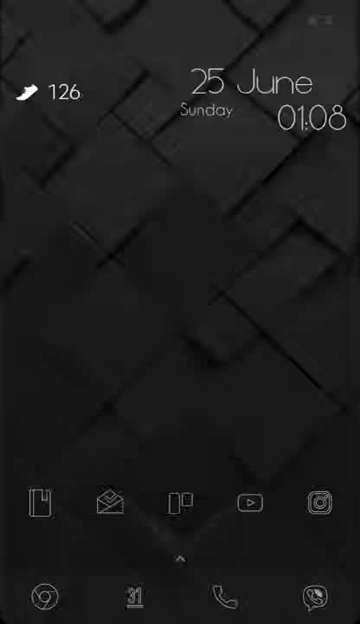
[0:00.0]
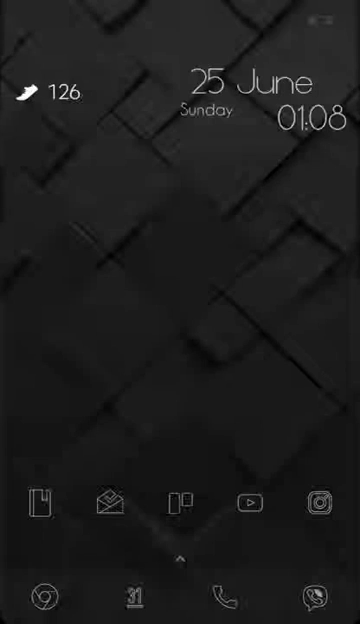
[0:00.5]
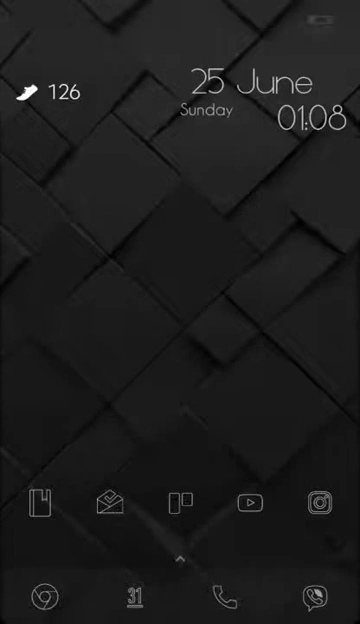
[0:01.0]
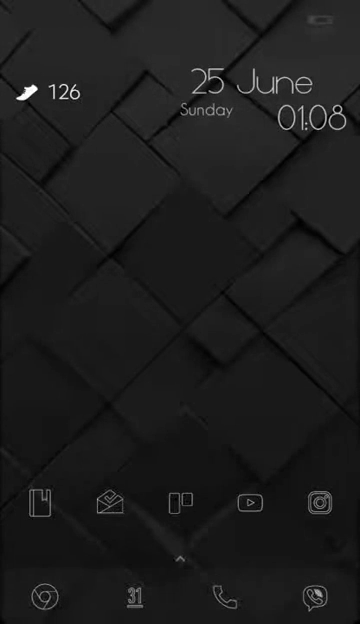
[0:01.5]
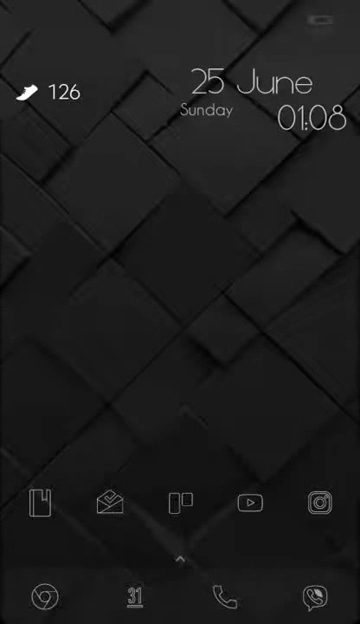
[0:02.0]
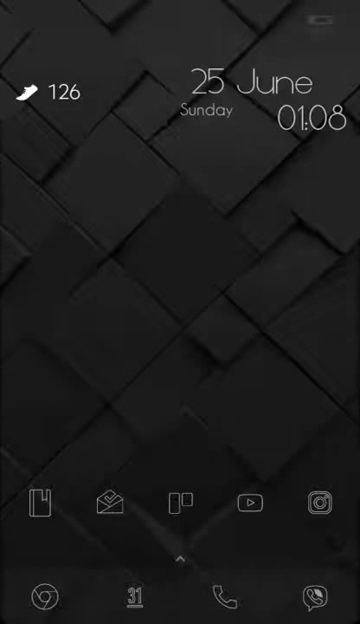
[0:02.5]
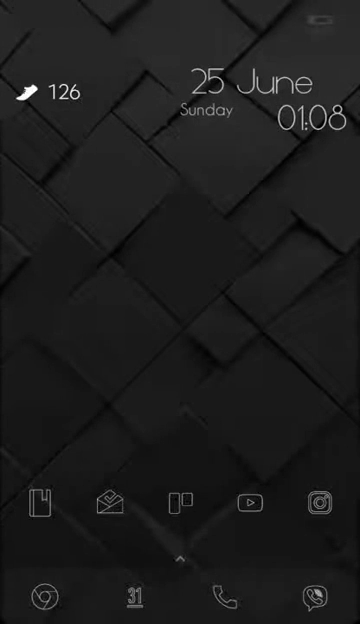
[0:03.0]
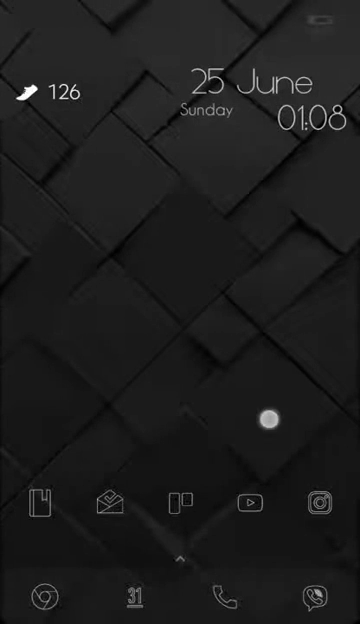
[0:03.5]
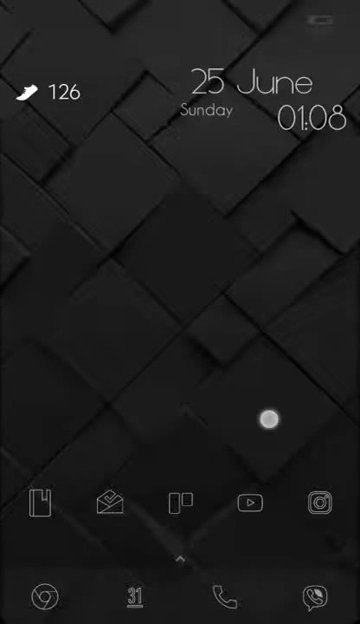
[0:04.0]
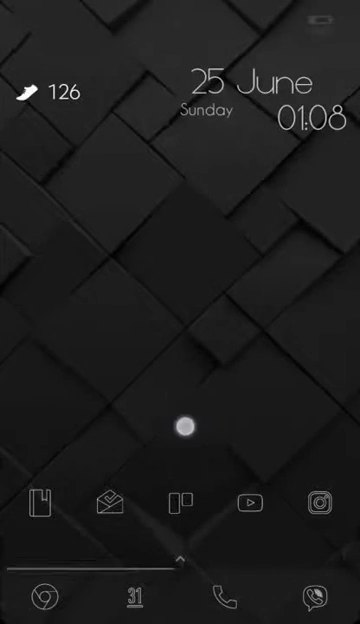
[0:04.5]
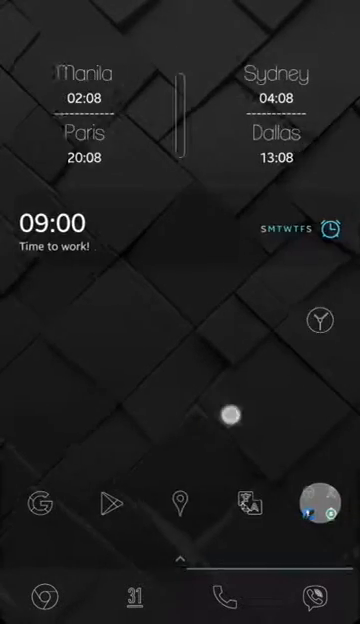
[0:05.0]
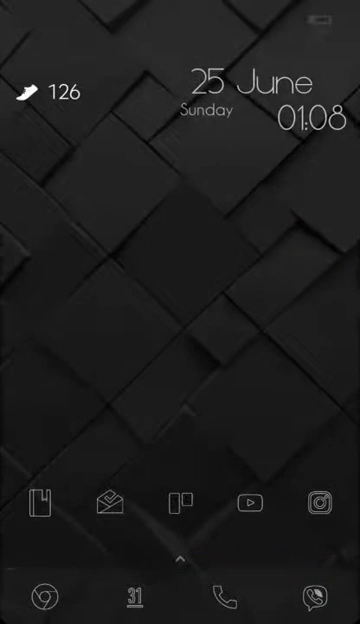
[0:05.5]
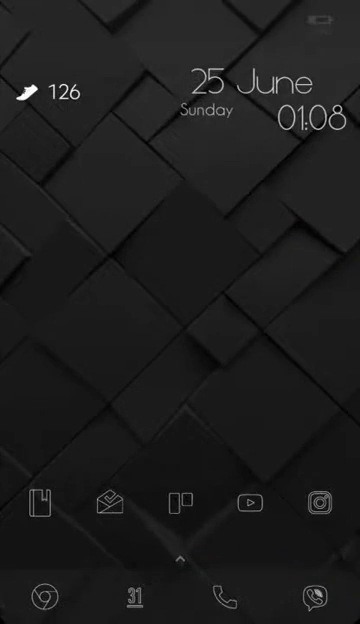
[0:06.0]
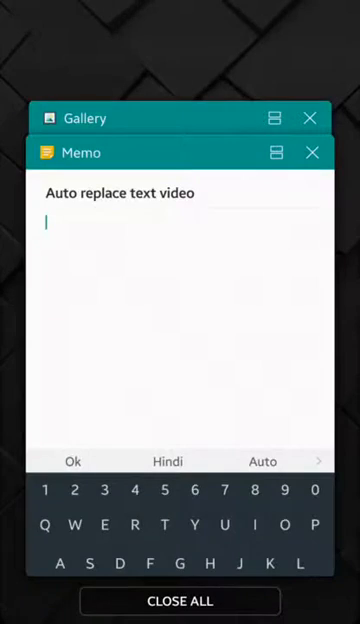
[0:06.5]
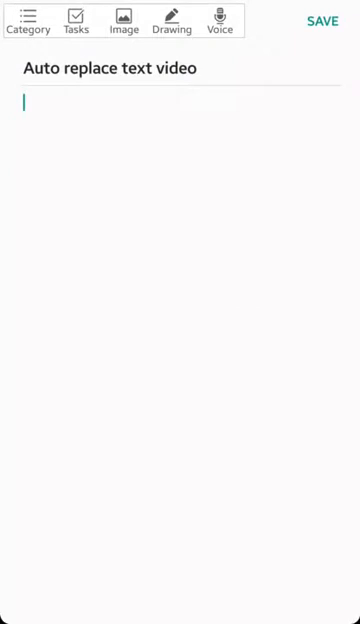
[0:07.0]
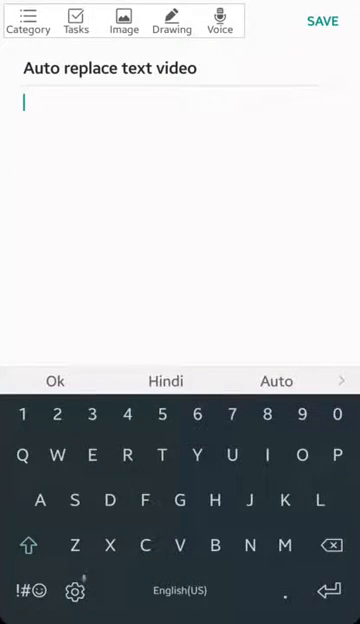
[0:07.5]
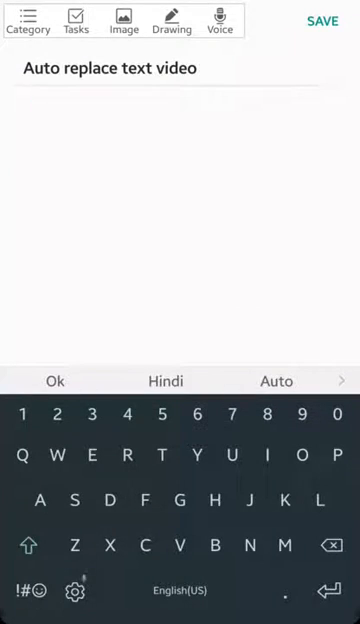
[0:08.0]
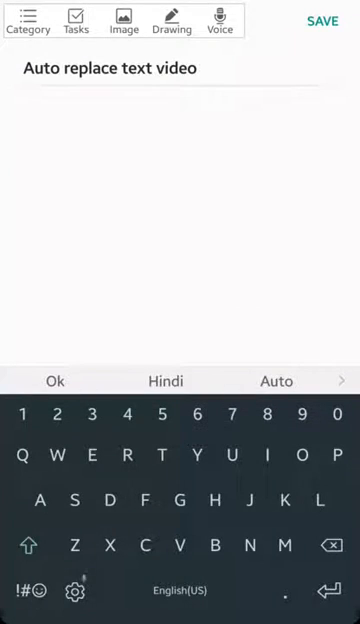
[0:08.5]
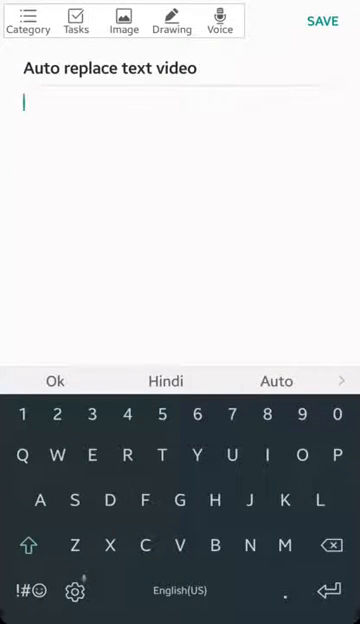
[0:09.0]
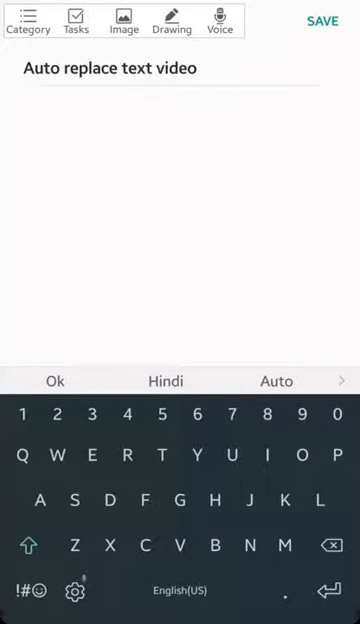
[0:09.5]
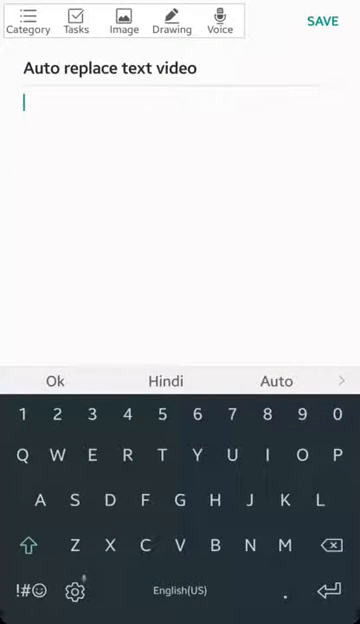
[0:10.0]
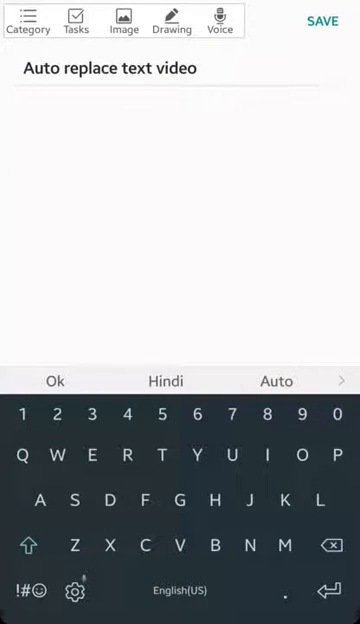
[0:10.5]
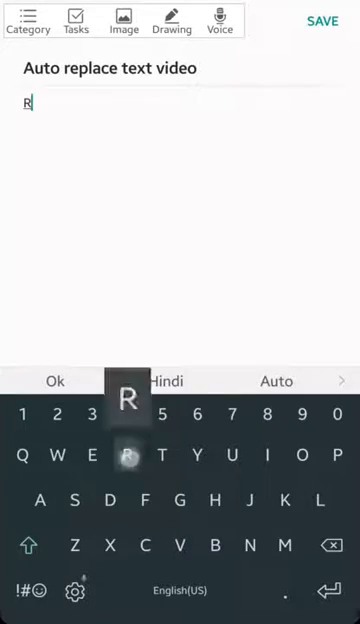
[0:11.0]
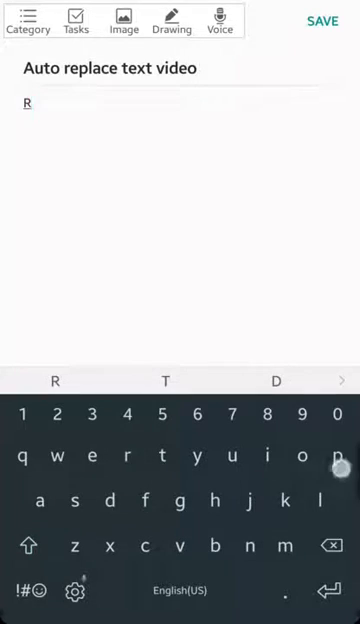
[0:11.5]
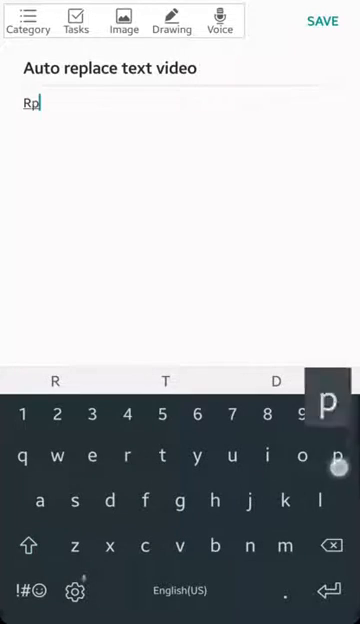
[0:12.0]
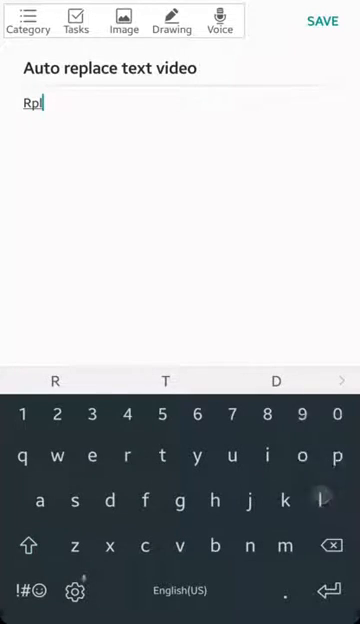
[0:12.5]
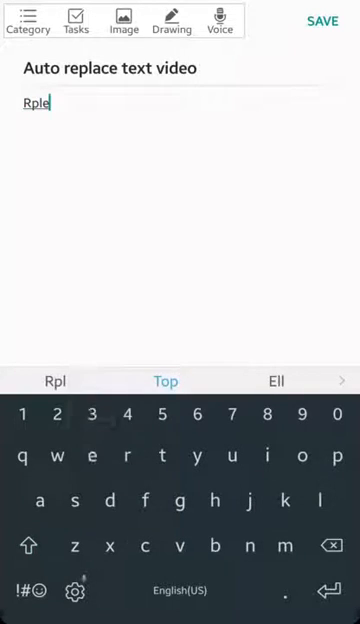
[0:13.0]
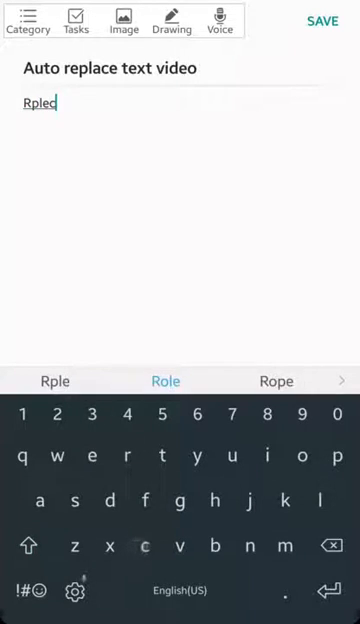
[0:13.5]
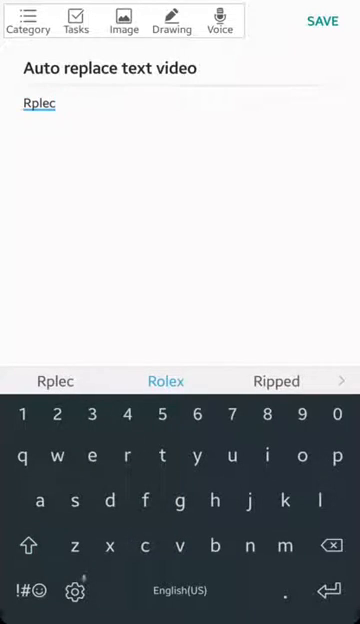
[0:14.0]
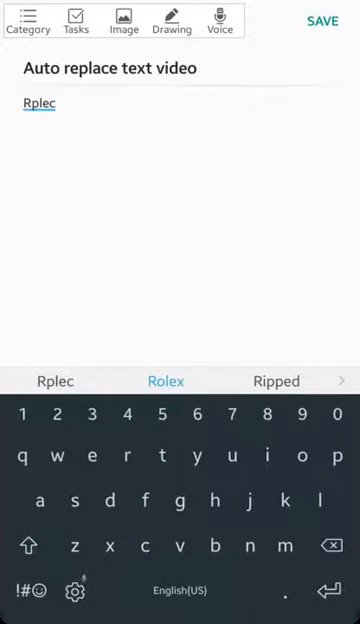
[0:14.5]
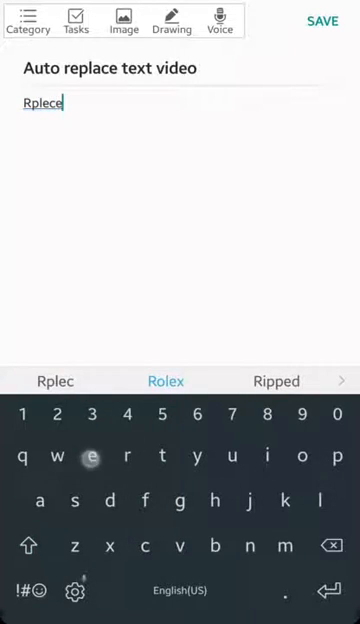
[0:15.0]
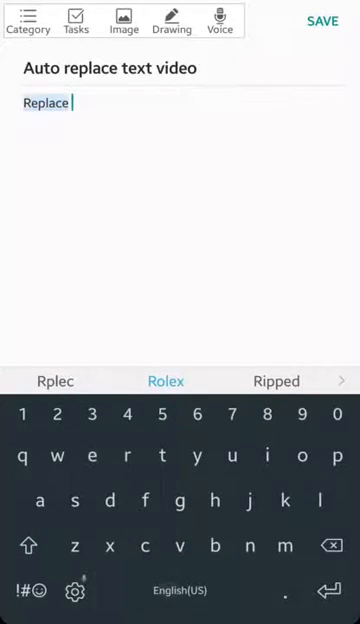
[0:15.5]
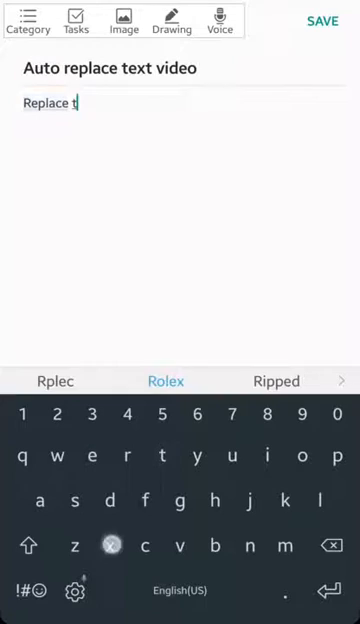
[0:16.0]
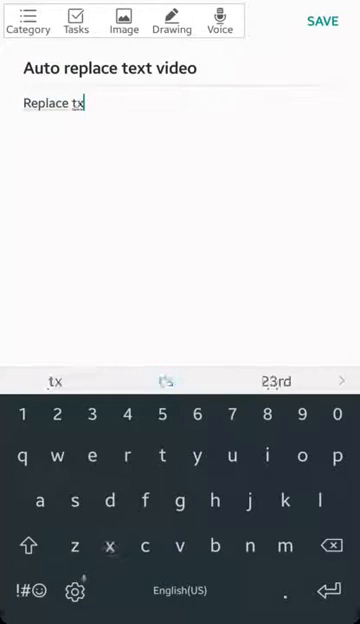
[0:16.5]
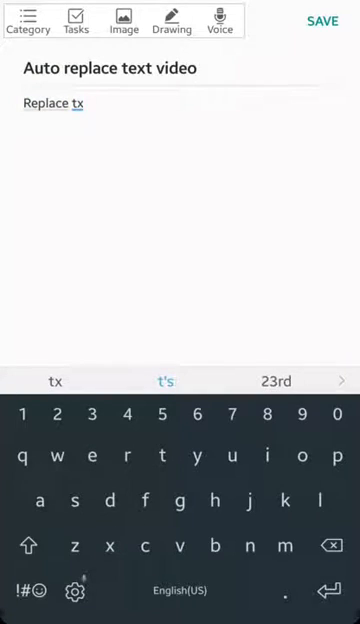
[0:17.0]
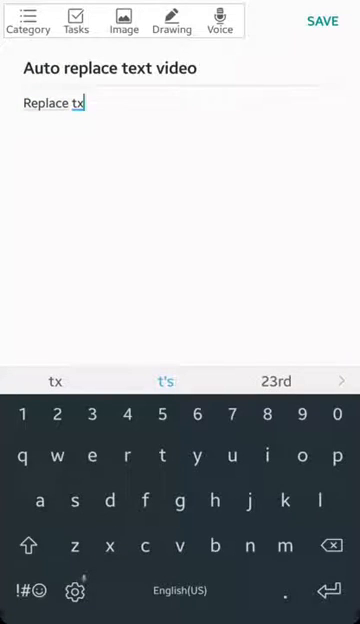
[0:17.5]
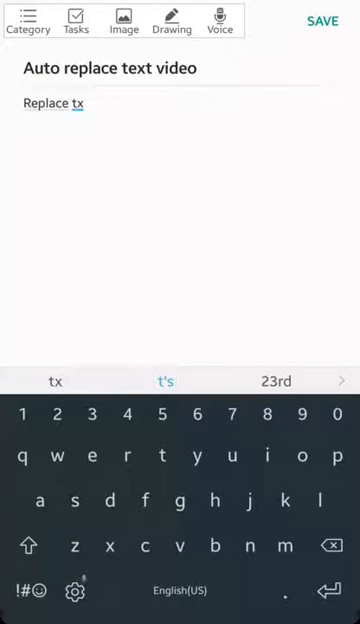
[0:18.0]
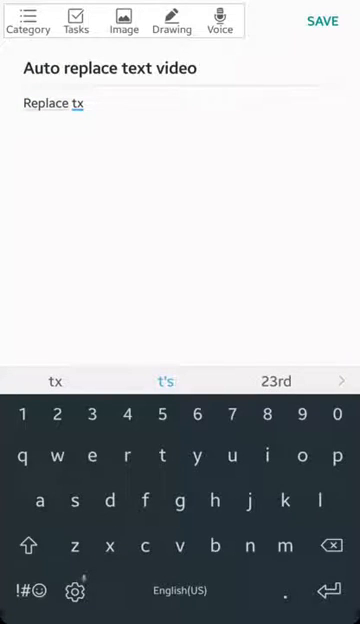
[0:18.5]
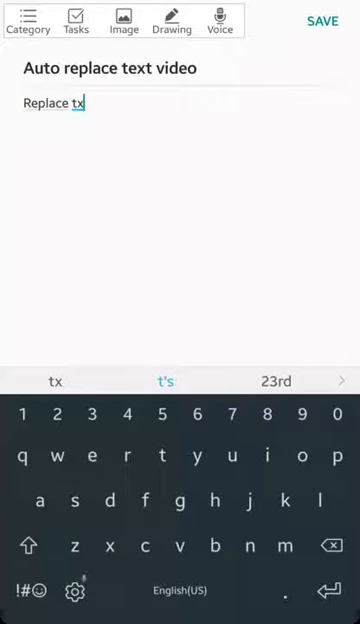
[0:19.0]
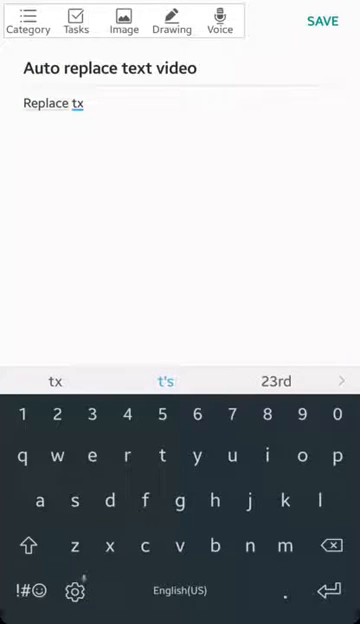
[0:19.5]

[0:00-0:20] A cell phone screen reads "25 June Sunday," with the time showing 1:08. There appear to be five icons below; one is an open envelope and another is a YouTube play screen. The home screen remains on view, its background a pattern of gray squares running diagonally. A screen then pops up that says "auto-replace text video," with a save button in the top right corner where the cursor currently is. A window opens, and the app in use looks like it is called Memo. The blank field takes up the entire phone screen, and right before the video ends the user types "replace TXT" into it.